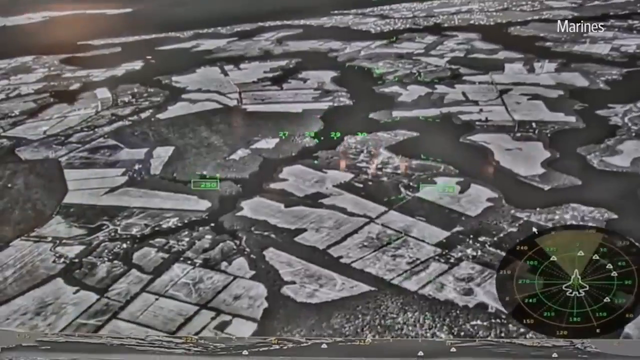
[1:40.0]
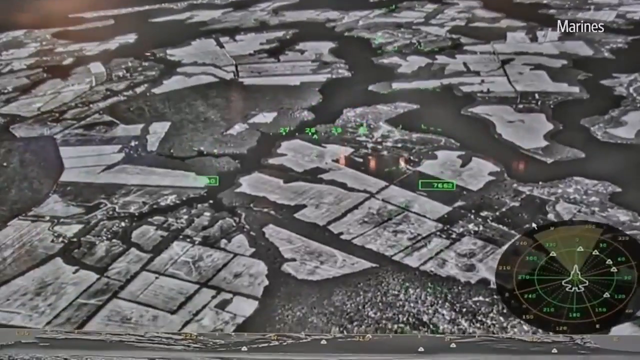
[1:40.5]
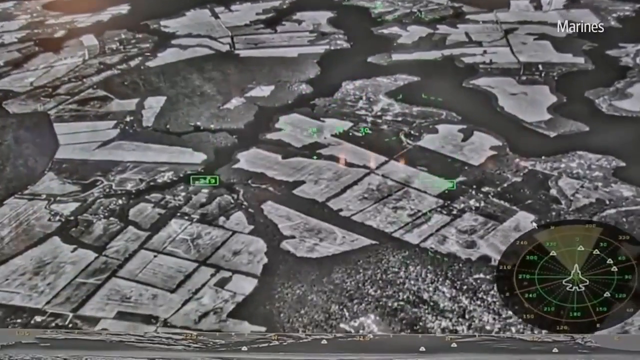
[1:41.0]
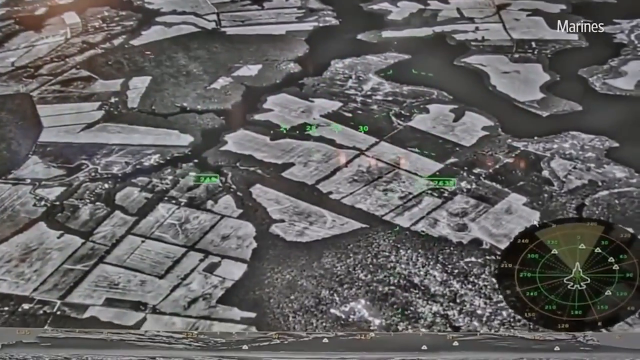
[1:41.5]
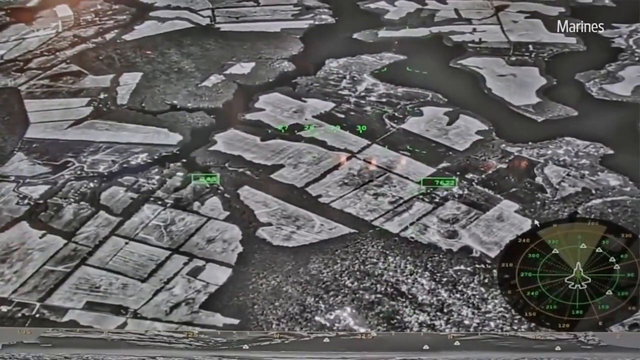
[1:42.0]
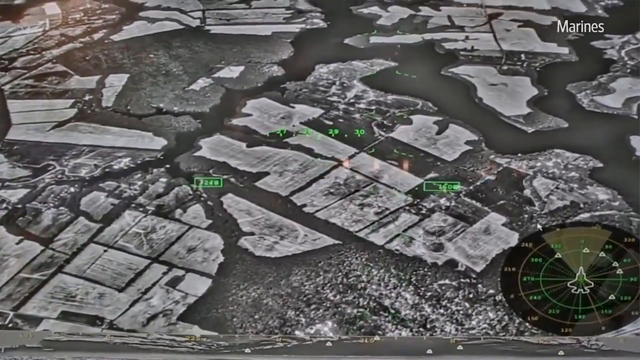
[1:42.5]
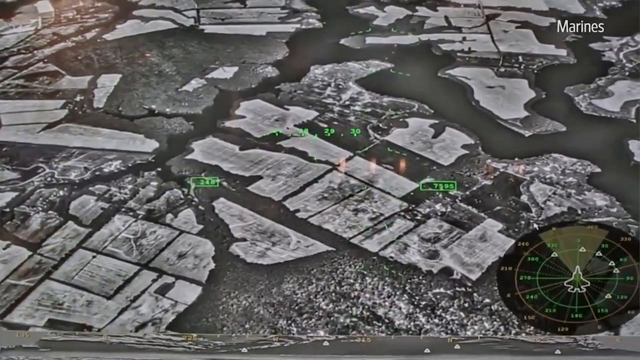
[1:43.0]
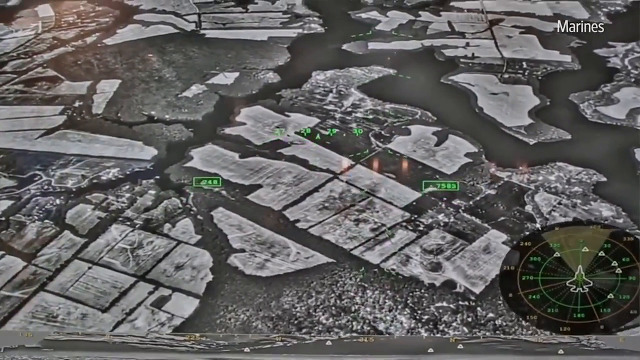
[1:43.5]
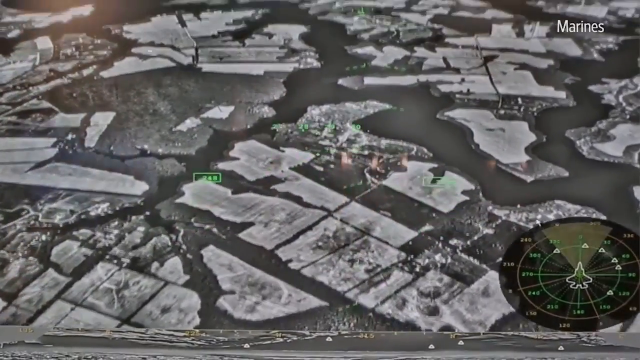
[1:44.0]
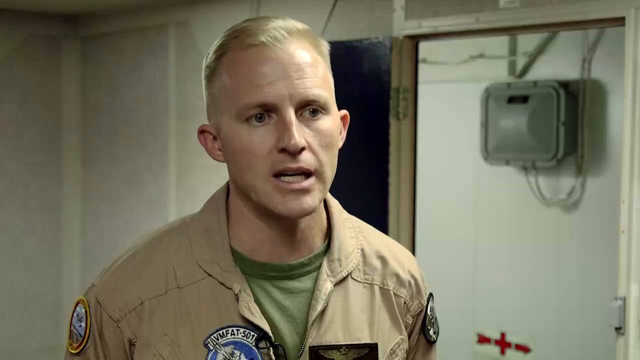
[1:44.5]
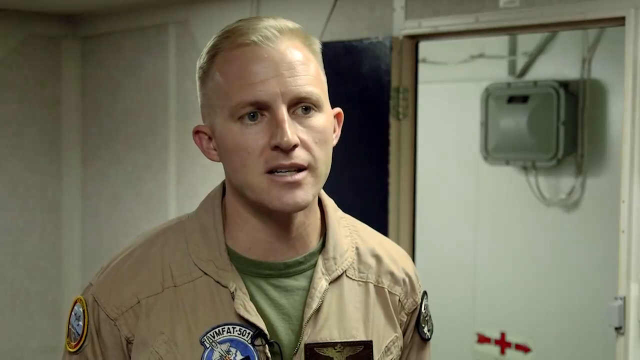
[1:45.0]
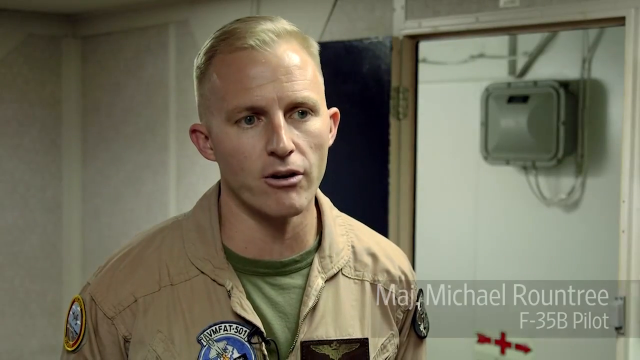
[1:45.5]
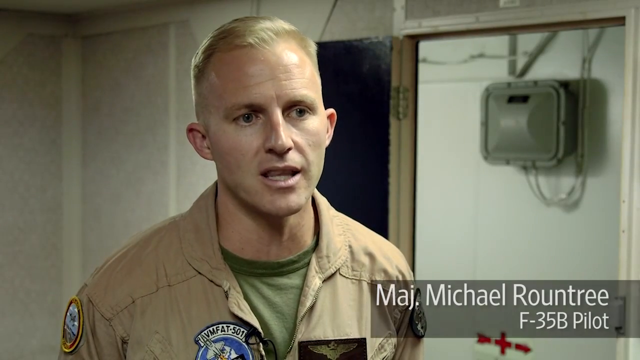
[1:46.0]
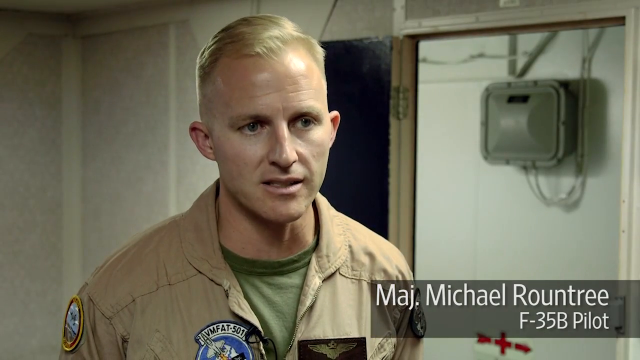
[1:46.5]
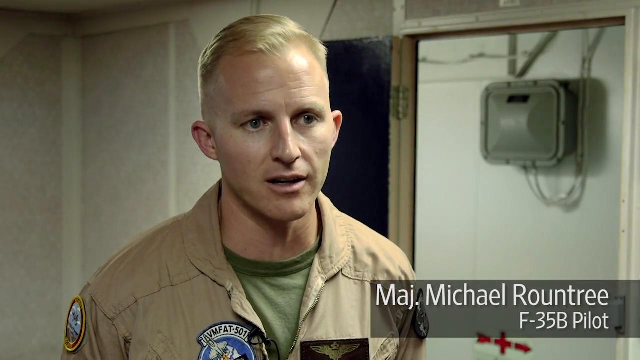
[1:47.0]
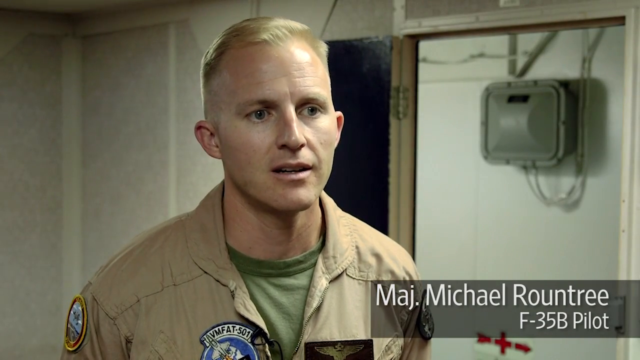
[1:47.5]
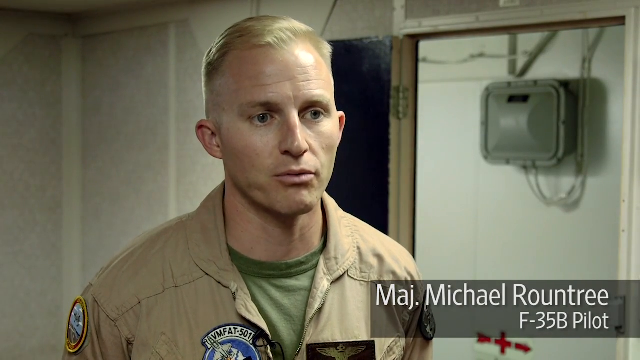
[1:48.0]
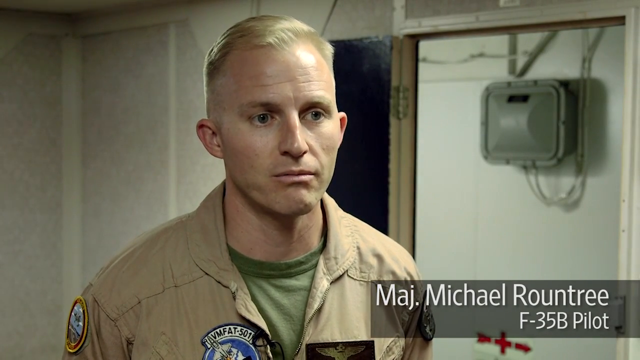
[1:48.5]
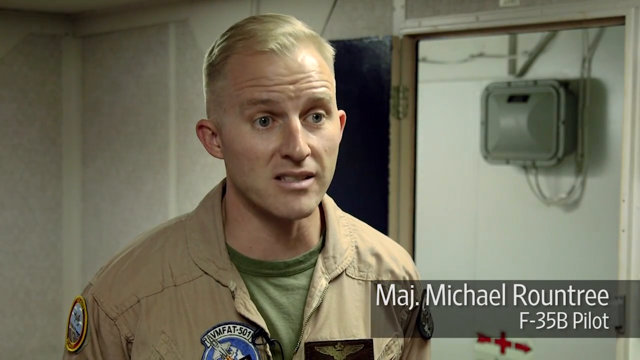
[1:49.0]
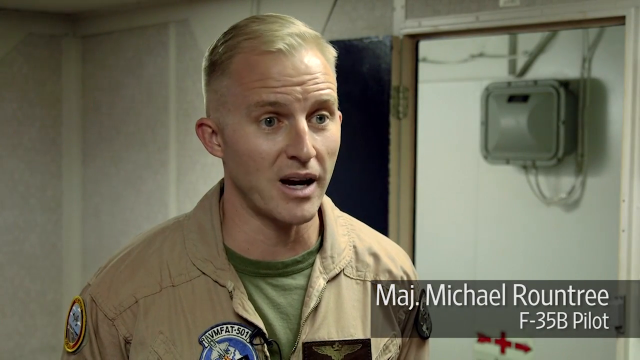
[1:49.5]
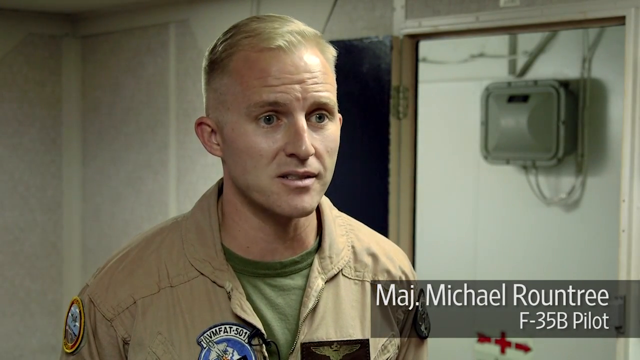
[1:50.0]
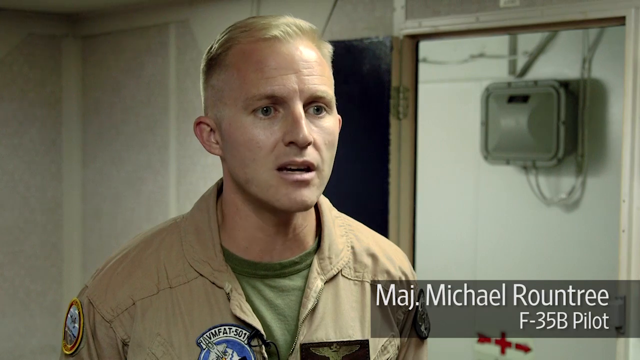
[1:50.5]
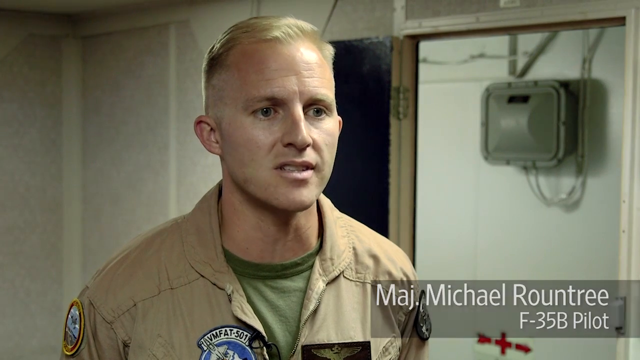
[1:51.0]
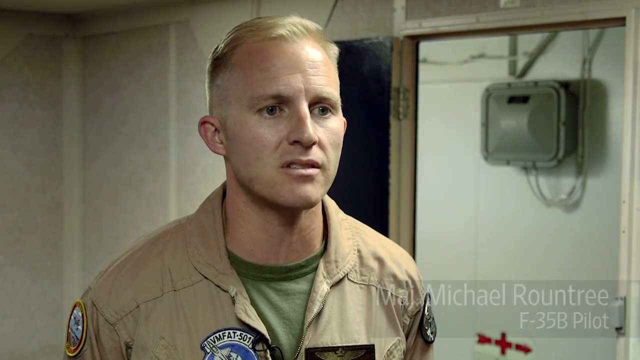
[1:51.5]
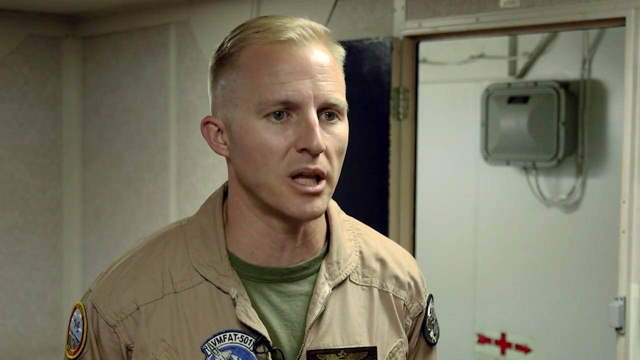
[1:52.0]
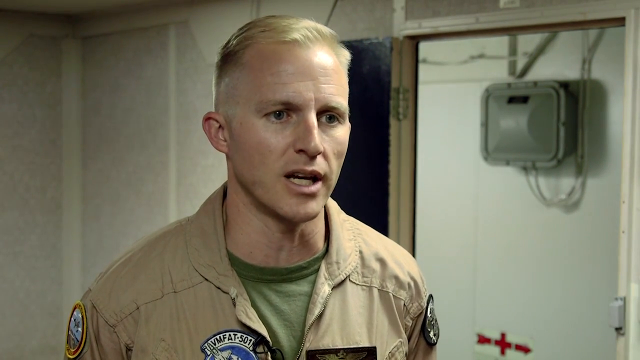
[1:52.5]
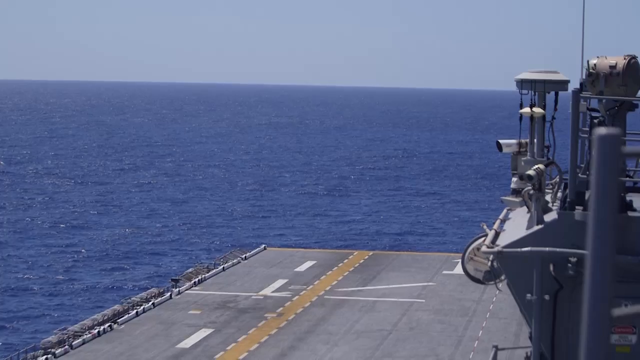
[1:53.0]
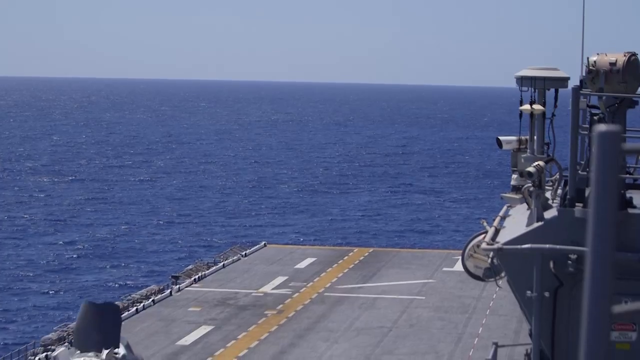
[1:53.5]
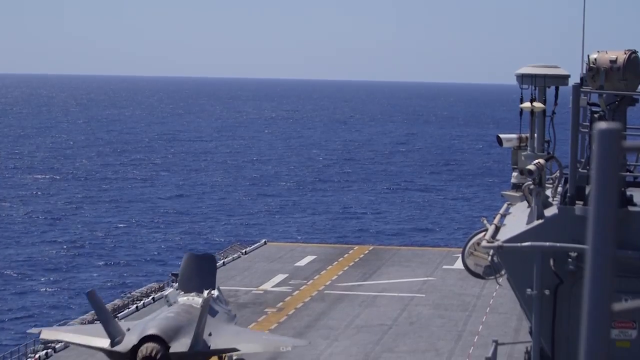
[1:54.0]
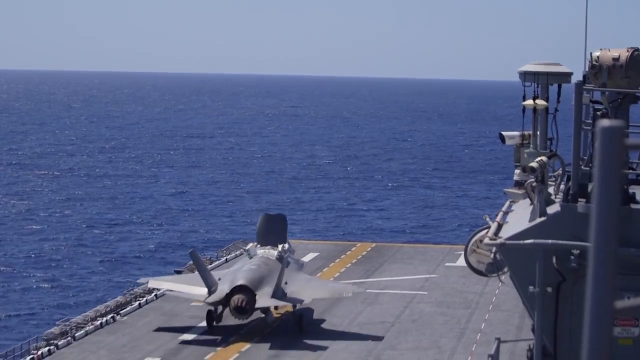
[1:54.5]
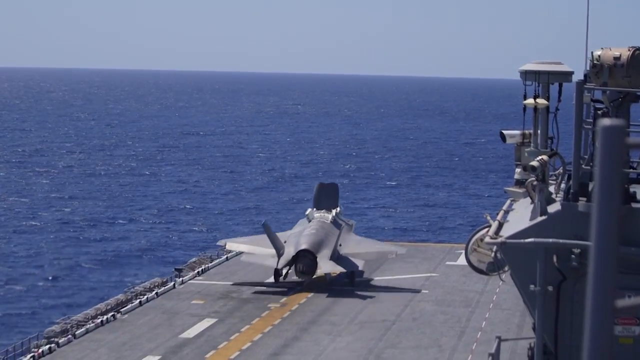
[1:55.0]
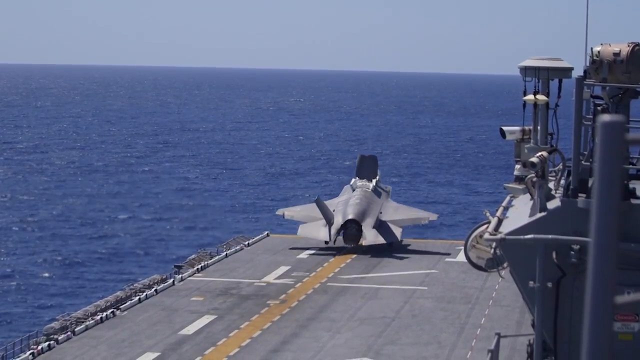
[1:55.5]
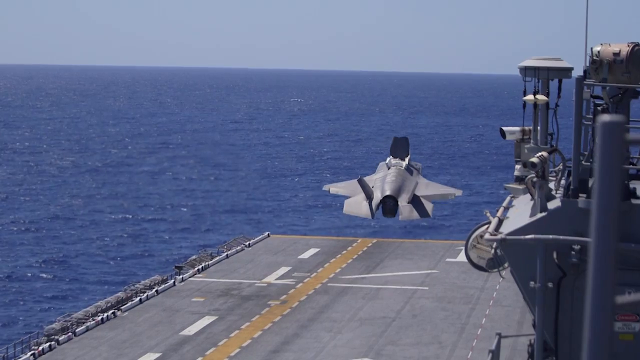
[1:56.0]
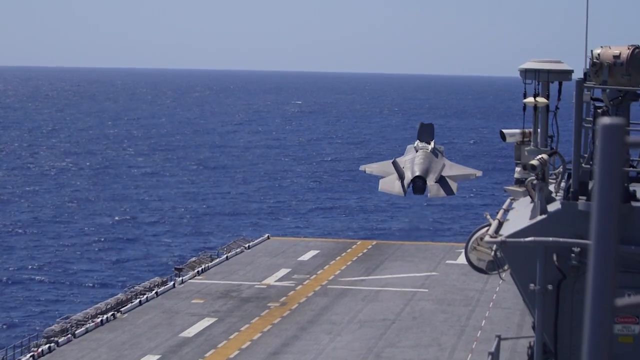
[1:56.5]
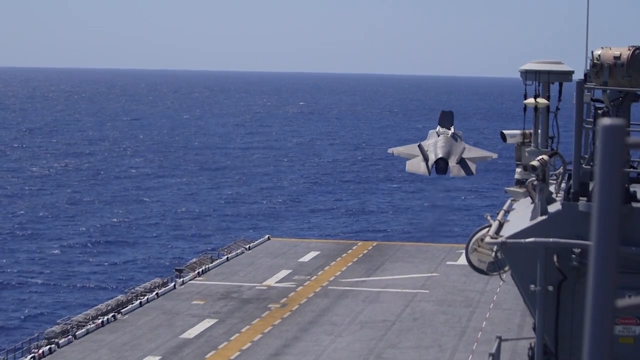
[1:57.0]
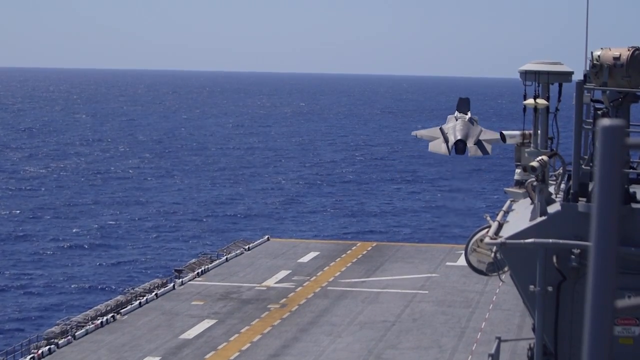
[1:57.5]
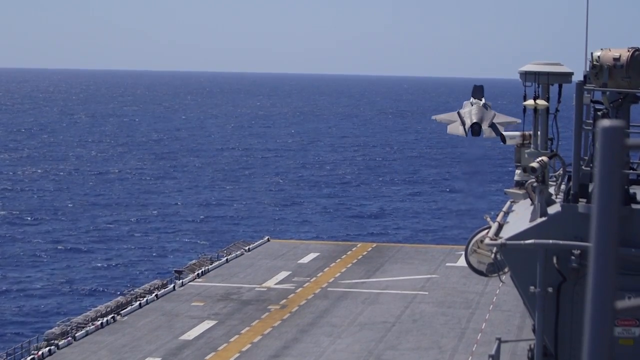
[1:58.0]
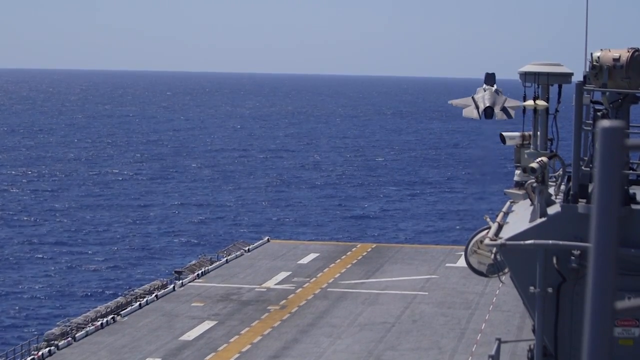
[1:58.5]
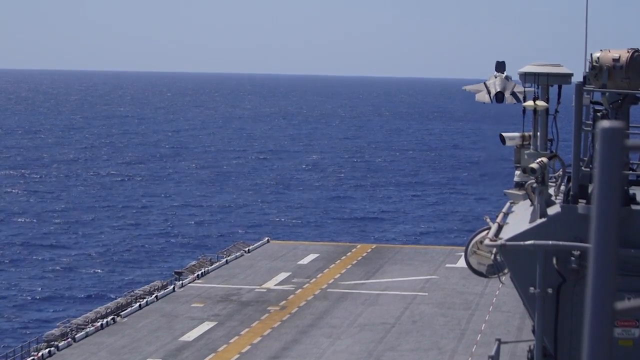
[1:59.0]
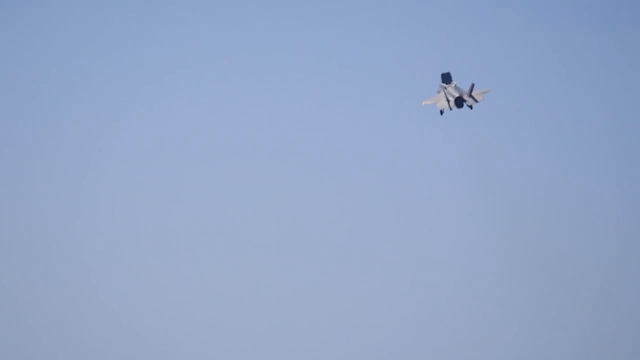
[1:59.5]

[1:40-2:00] An aerial view that looks like night vision shows the lower terrain at the bottom. In the bottom right corner is a circle that acts like some sort of GPS, with the figure of a jet in its middle. The scene changes to a marine or pilot, with the name "Michael Rountree" in the bottom right corner and captions there stating that he is a pilot. He has short blonde hair and is being interviewed, speaking to someone on his right side. The scene then changes to what looks like the edge of a carrier's runway, and a jet takes off, reaching the edge and flying off the carrier. The jet is then shown flying in the sky.